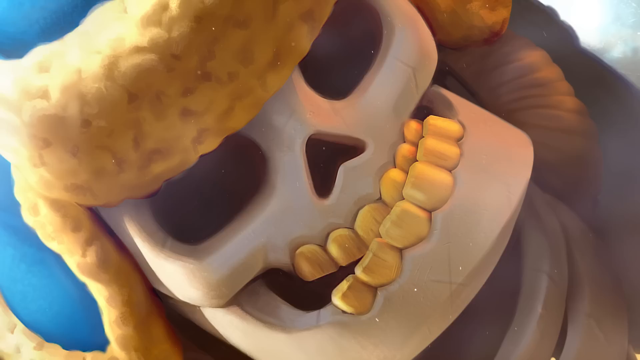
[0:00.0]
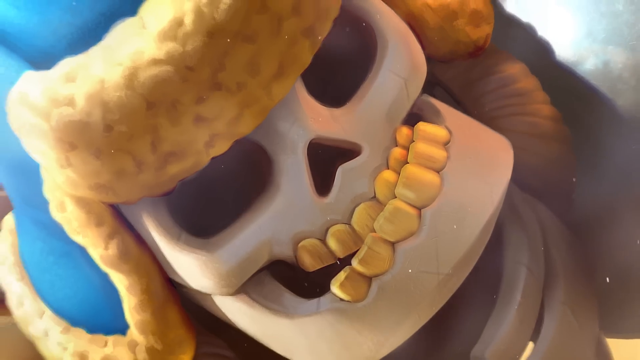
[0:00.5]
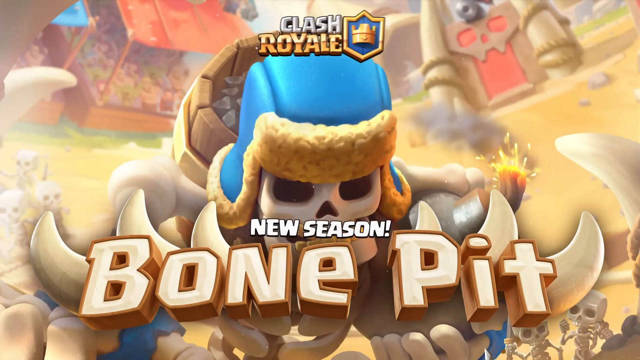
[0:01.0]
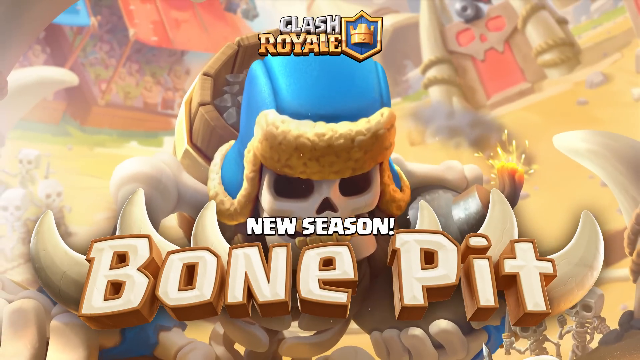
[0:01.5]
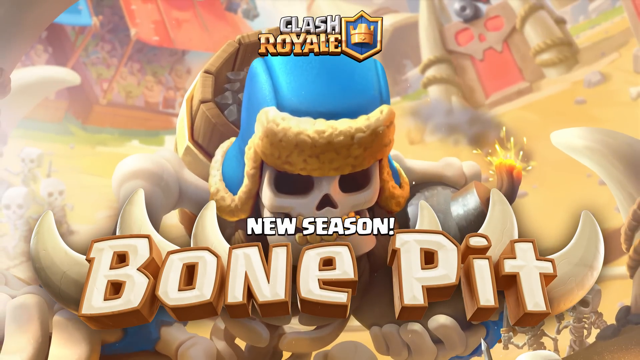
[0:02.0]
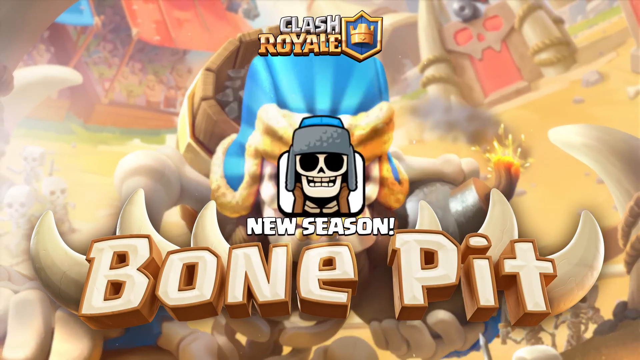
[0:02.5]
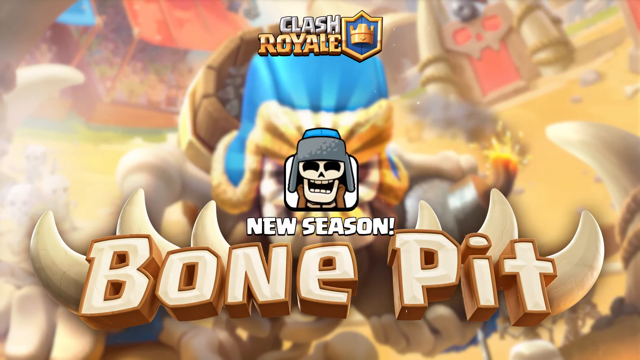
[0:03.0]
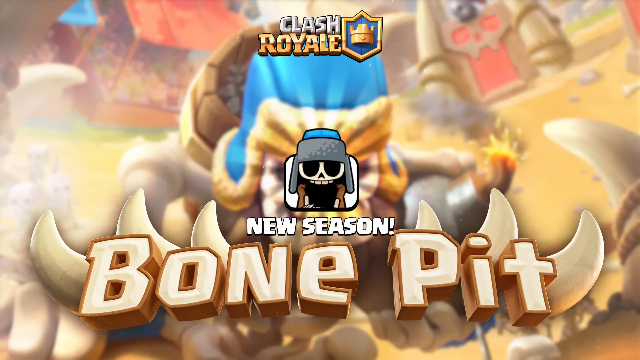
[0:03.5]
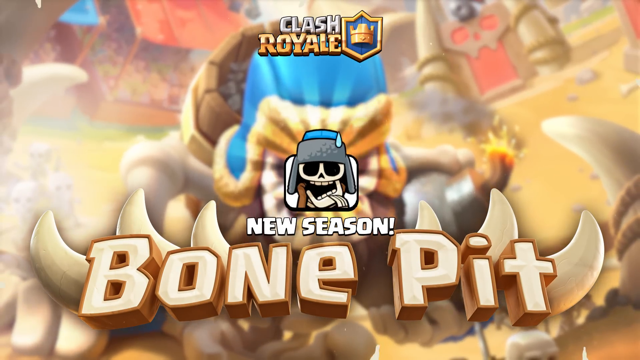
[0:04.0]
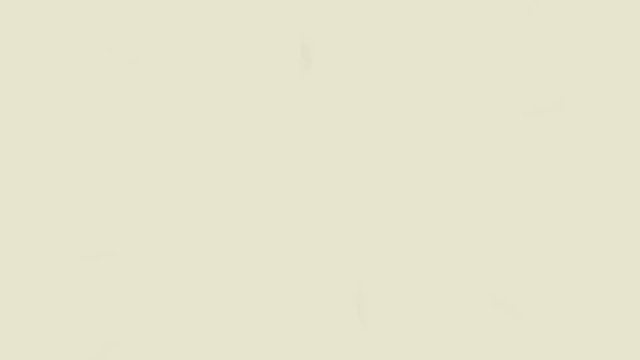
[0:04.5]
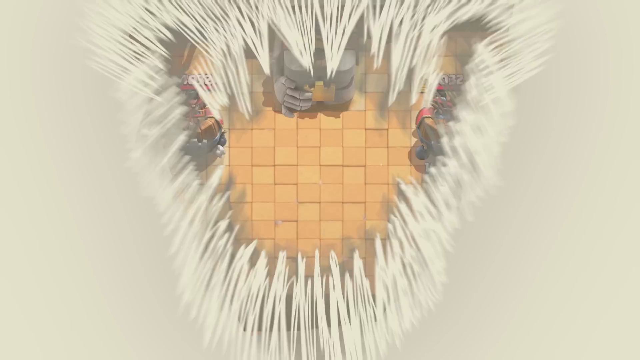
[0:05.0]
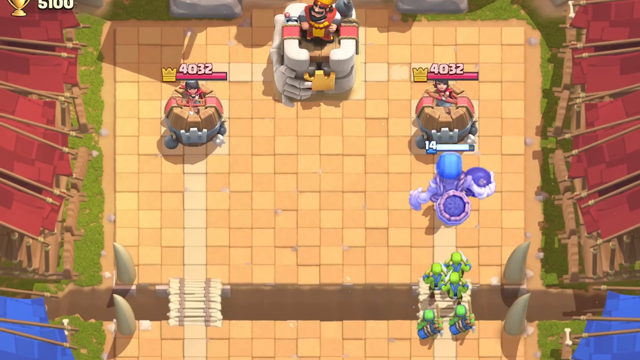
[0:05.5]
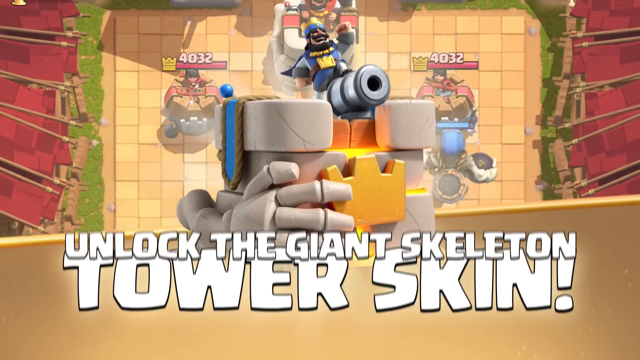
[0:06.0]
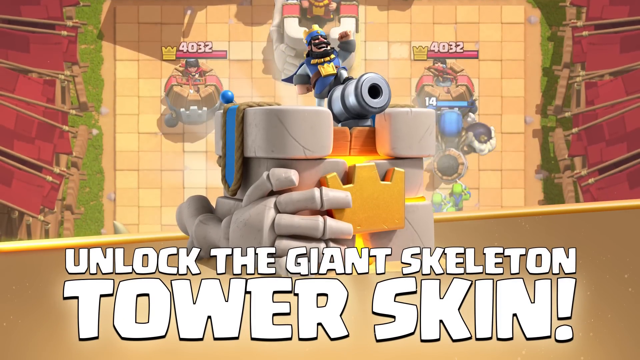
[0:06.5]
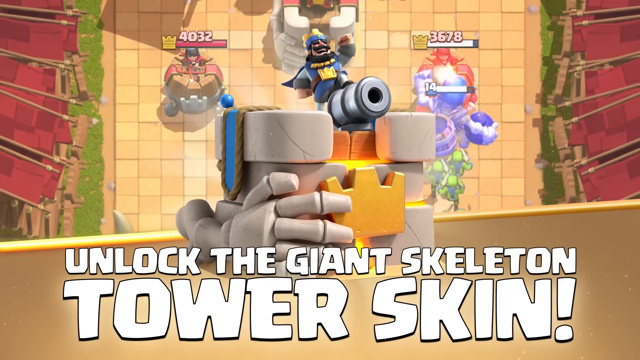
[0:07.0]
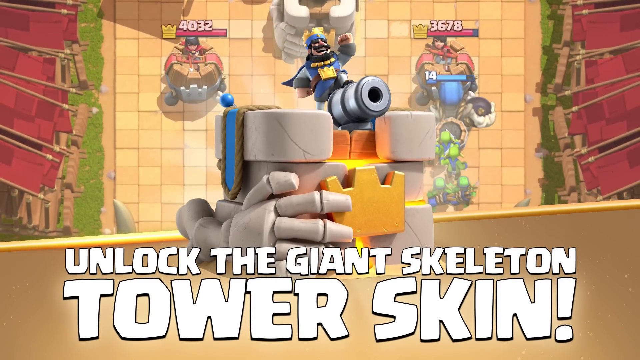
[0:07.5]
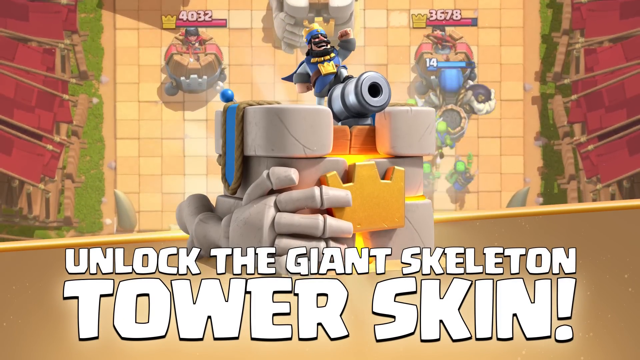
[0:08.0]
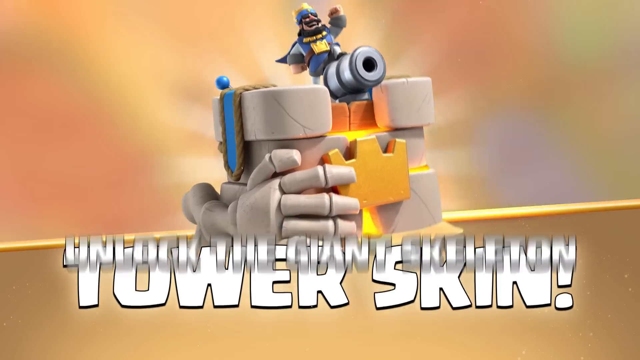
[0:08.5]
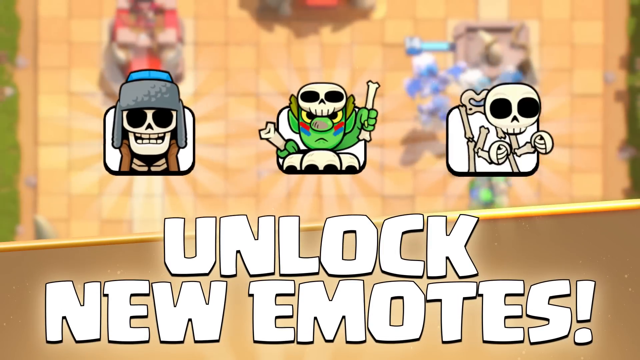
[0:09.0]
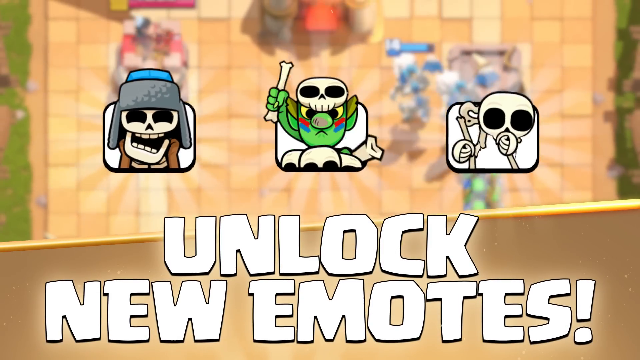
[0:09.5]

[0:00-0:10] The video opens with a Clash Royale cutscreen for a mobile game. A label indicates that this is the Bone Pit and a new season. The advertisement uses a skull-and-bone figure holding a weapon, wearing a winter hat and gold teeth. A cutscene follows, advertising that new emotes and new weapons can be unlocked, and an animated backdrop is shown as the new weapons are promoted. The game is a tower defense game, and new tower skins are also advertised; each of these features is a small part of the larger release.